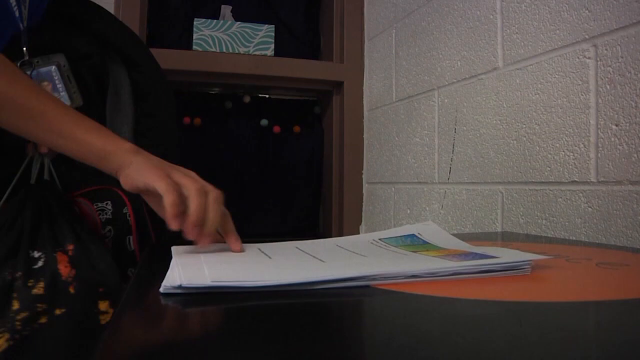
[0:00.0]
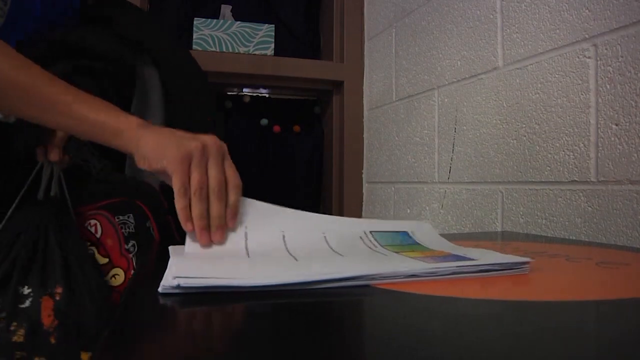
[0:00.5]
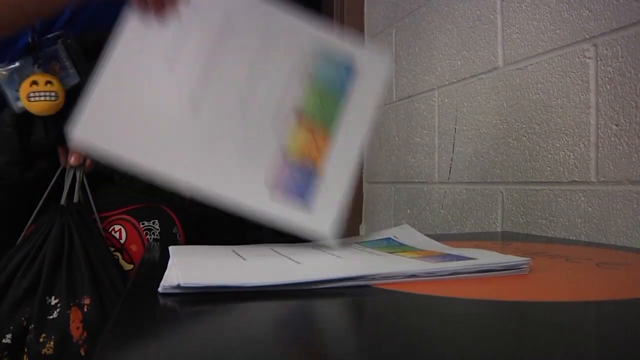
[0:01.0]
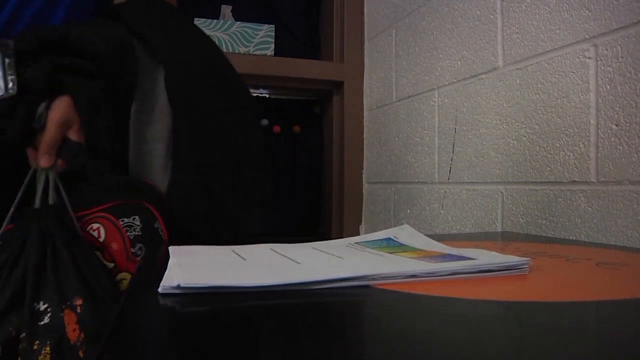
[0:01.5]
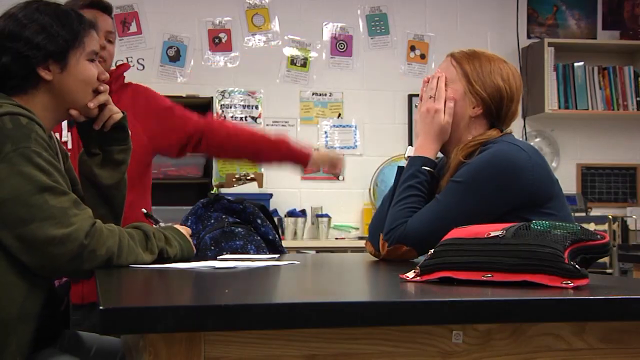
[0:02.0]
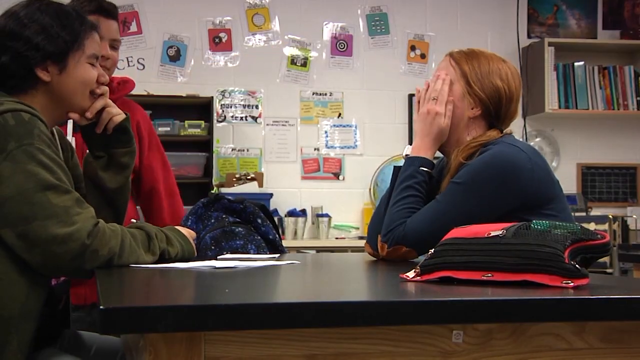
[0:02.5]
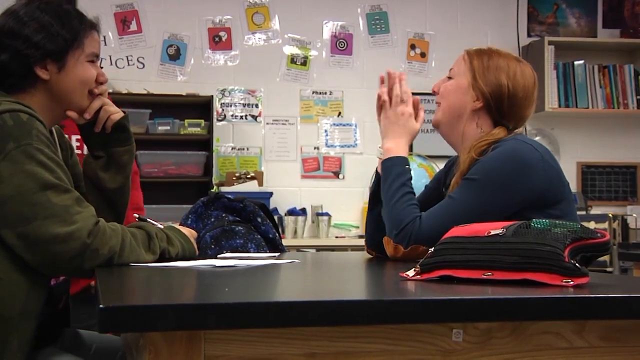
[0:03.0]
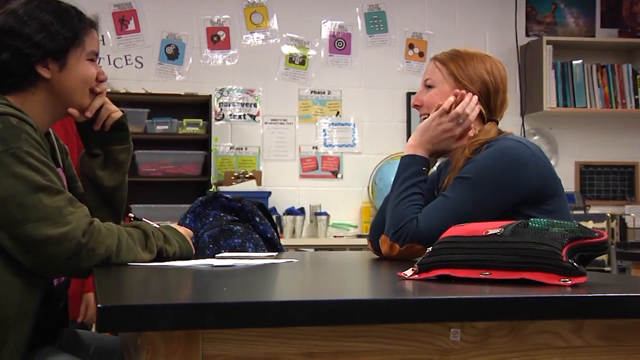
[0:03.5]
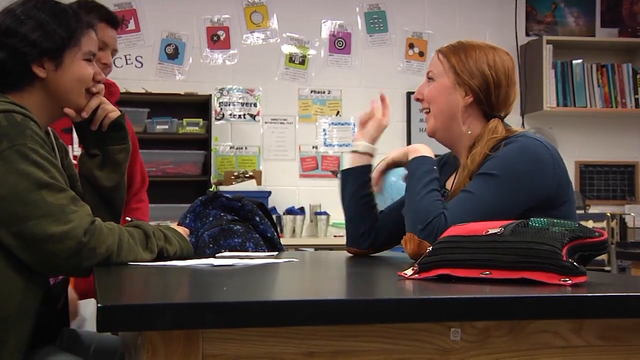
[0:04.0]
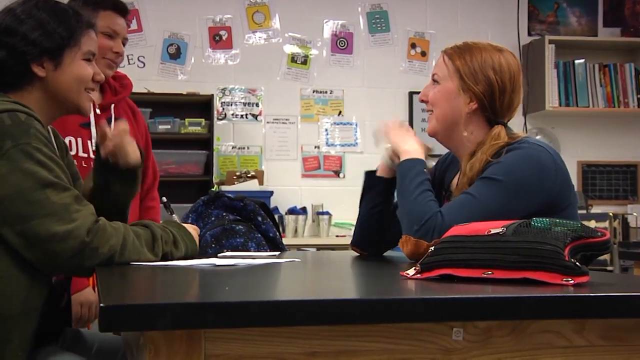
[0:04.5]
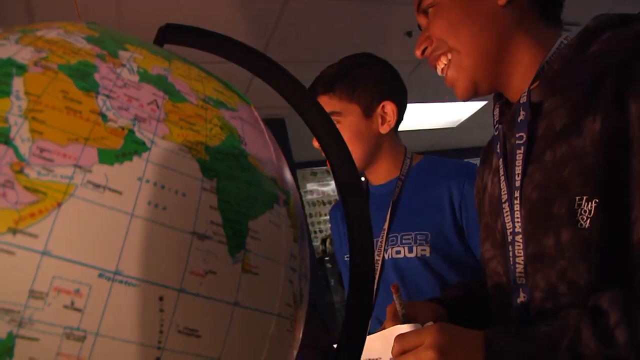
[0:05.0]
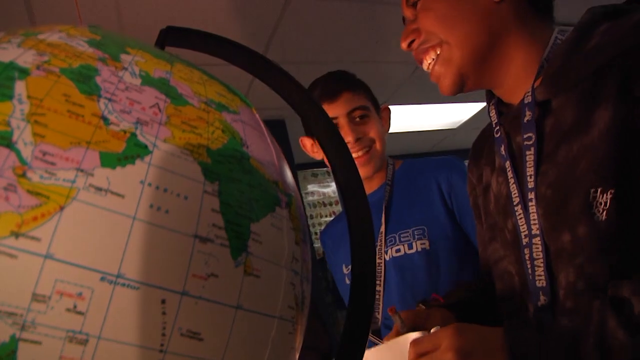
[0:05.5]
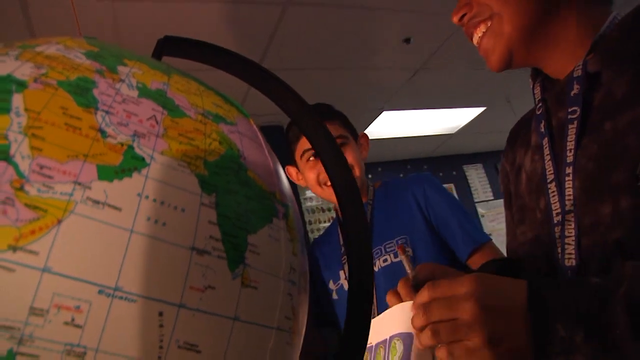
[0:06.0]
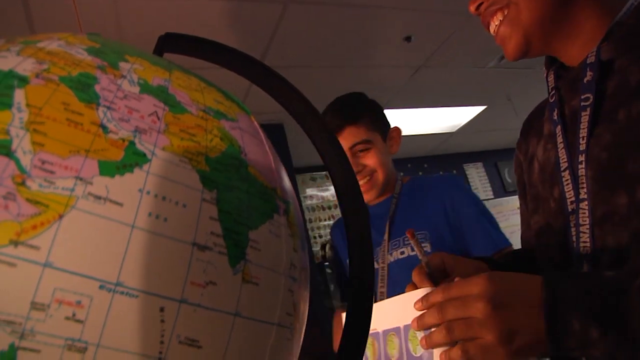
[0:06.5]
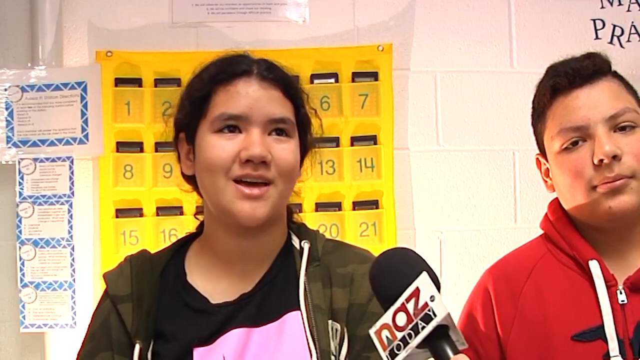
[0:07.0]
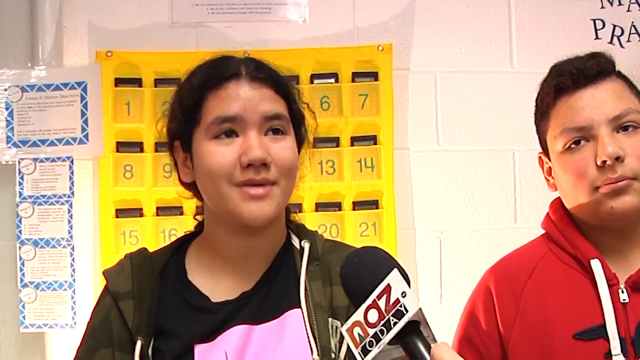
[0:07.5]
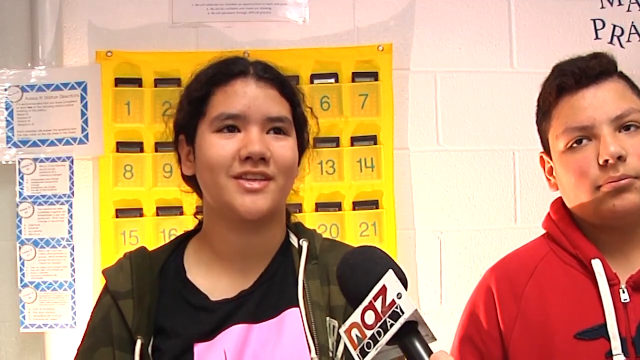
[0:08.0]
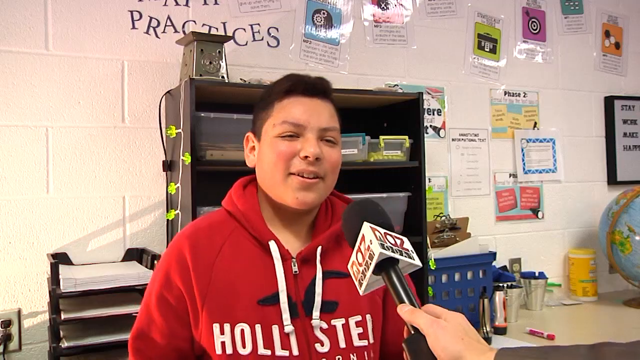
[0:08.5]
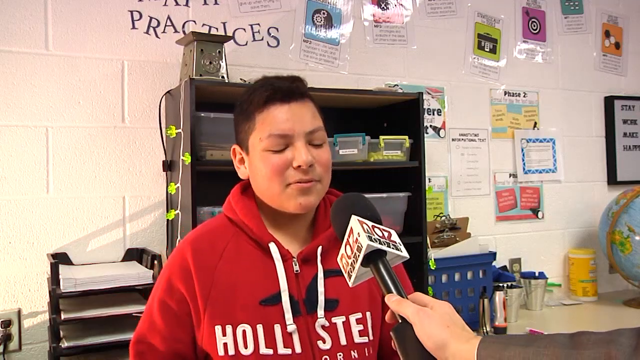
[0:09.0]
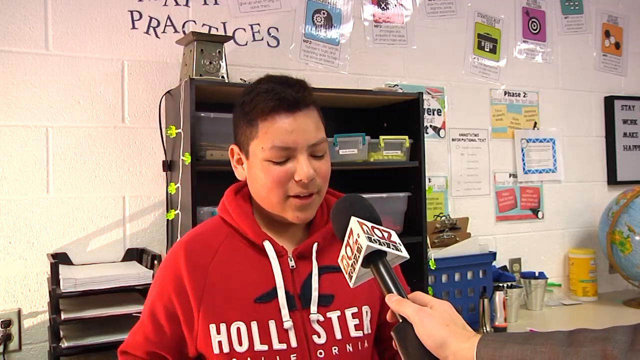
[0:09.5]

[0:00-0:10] A pile of papers sits on a desk that is mainly black with a patch of brown in the middle. Behind the table is a white wall with a brick-like texture. A Caucasian hand picks up the papers, and he walks off holding a backpack. The scene transitions to three students around a table: a male standing in a red hoodie and two females sitting. One, with black hair, sits in a thinking pose with her left hand next to her mouth and her right hand on the table holding a pen. The Caucasian lady with orange hair sitting across from her has both hands against her face. All three students talk and laugh, gesturing toward each other. The scene cuts to two males laughing next to a globe. Next, the lady with black hair stands next to the male in the red hoodie with a microphone in front of her, apparently being interviewed. The scene transitions to the man in the red hoodie, who is also being interviewed.